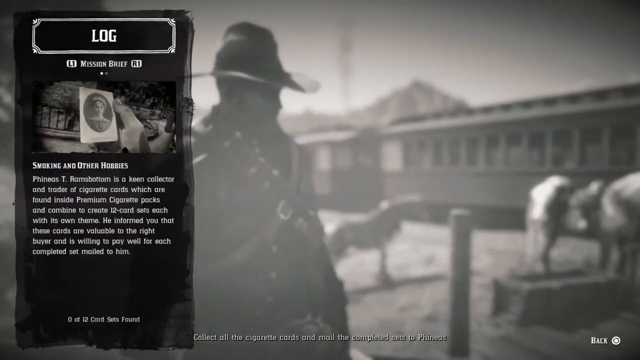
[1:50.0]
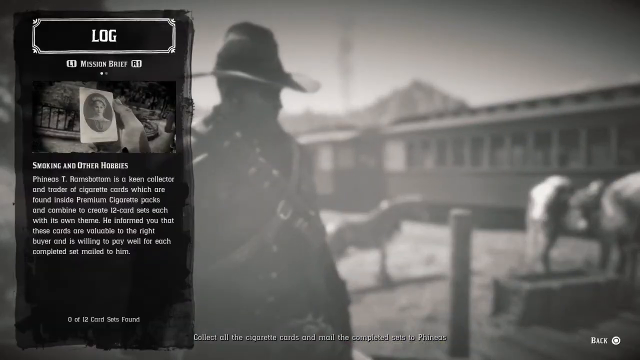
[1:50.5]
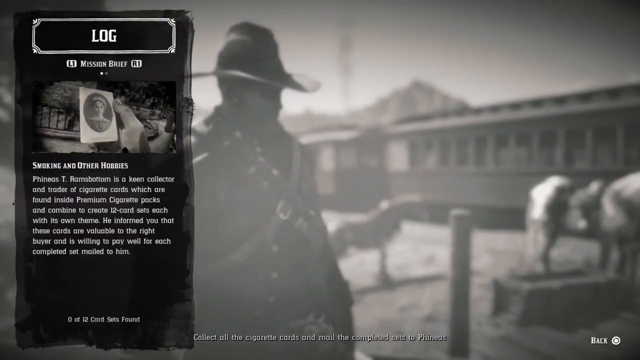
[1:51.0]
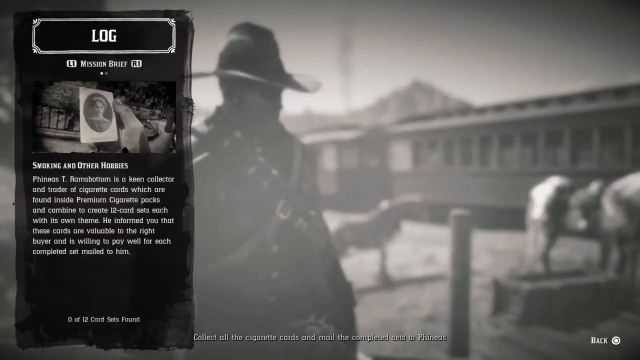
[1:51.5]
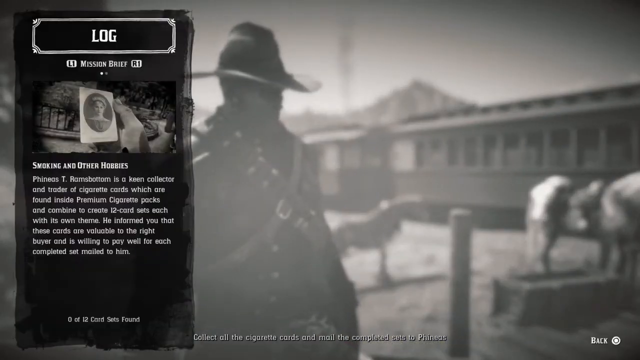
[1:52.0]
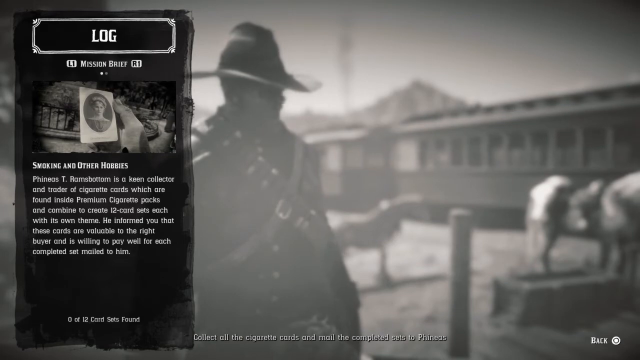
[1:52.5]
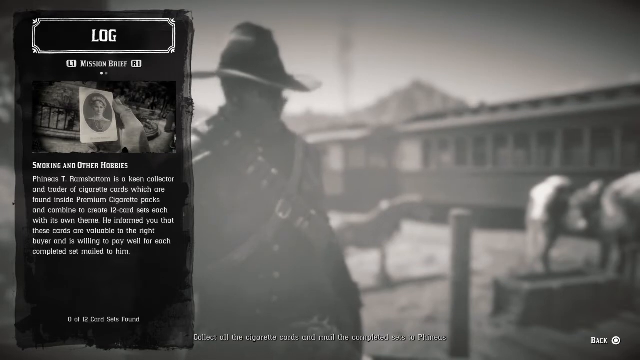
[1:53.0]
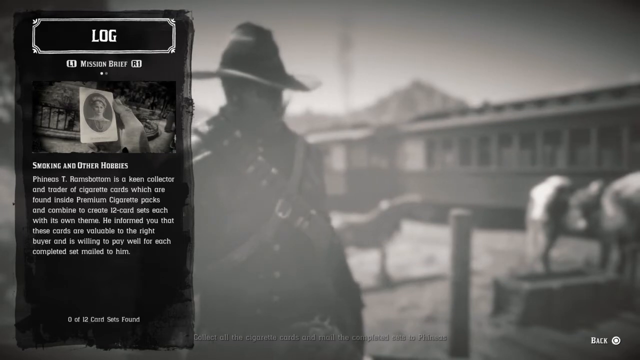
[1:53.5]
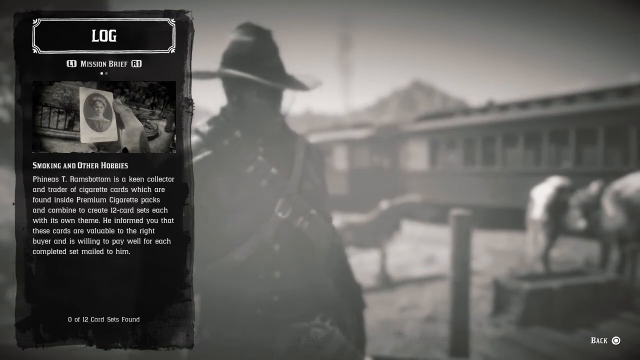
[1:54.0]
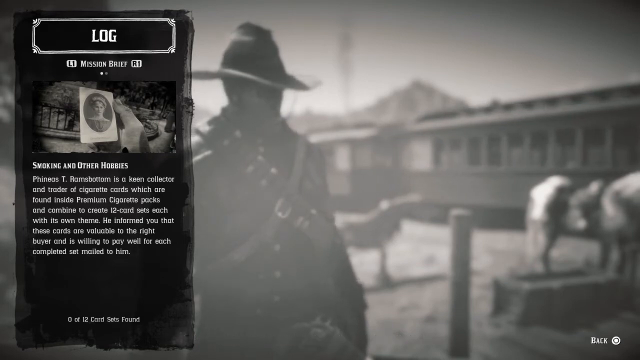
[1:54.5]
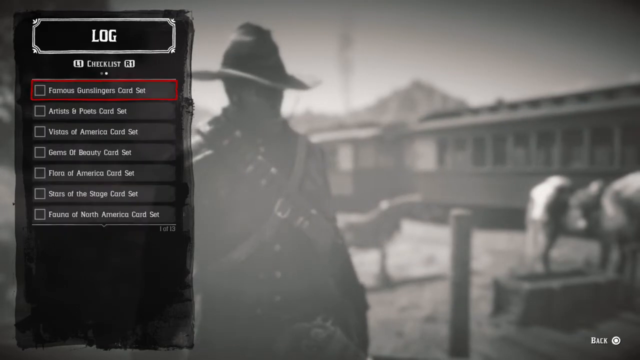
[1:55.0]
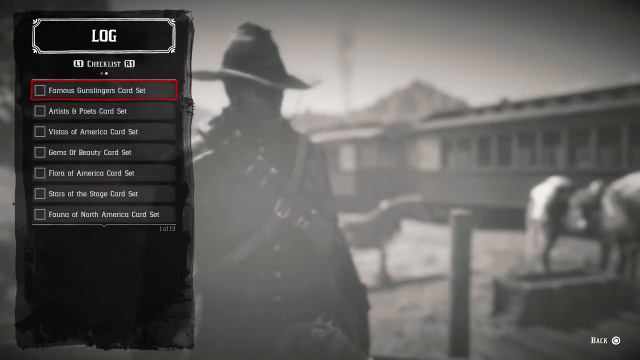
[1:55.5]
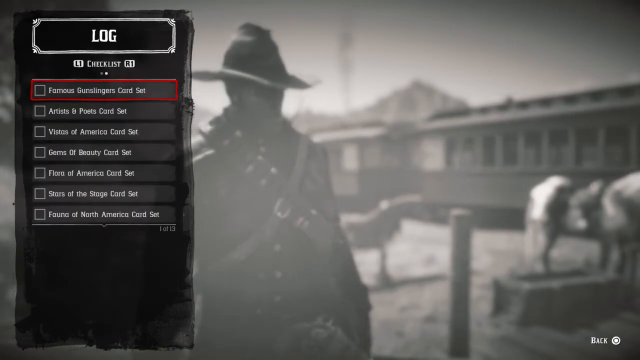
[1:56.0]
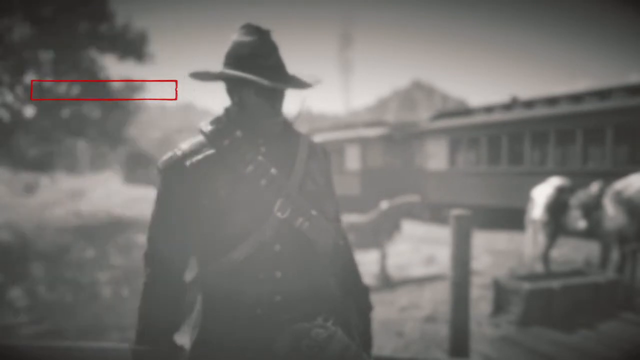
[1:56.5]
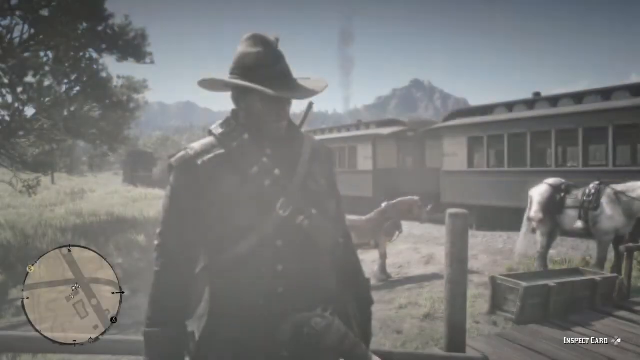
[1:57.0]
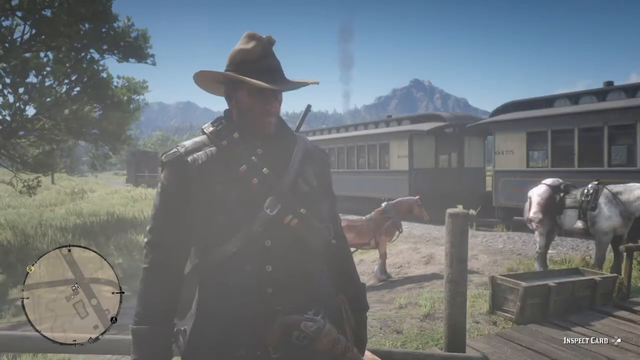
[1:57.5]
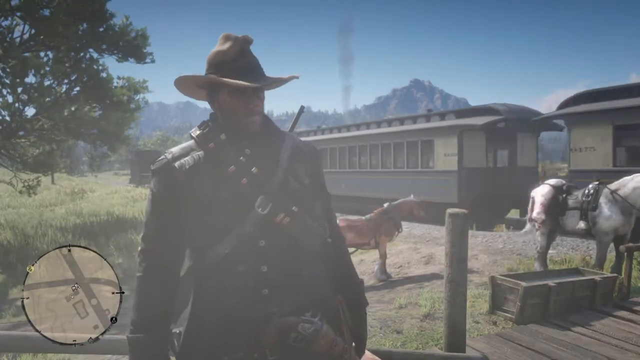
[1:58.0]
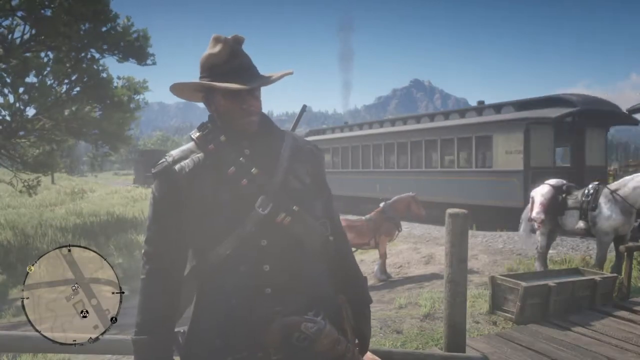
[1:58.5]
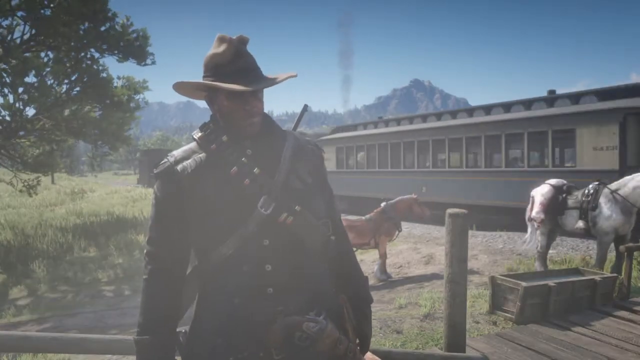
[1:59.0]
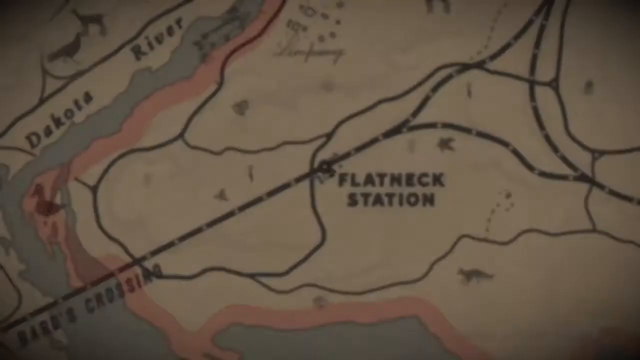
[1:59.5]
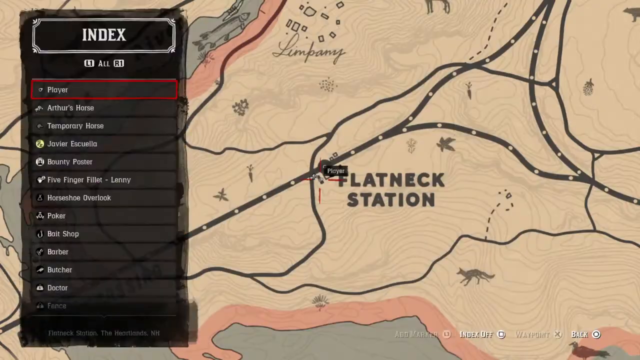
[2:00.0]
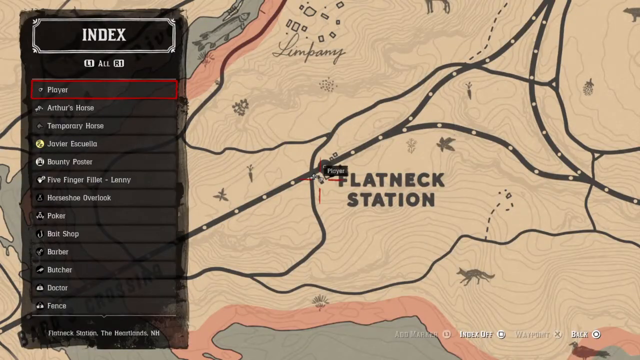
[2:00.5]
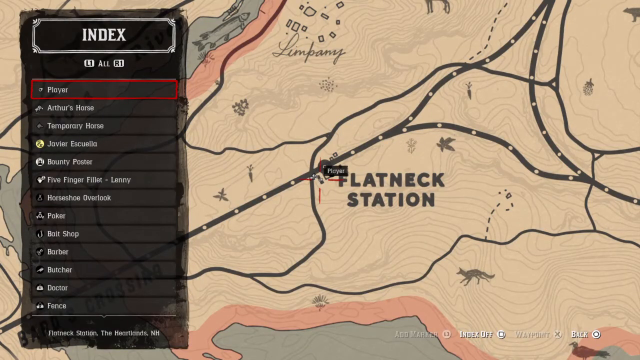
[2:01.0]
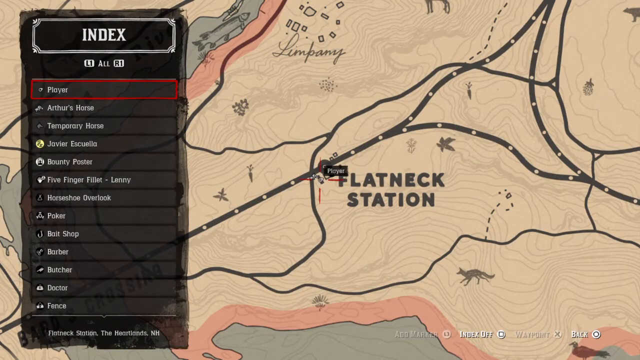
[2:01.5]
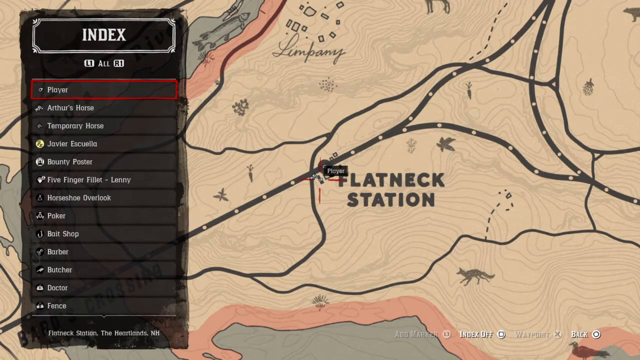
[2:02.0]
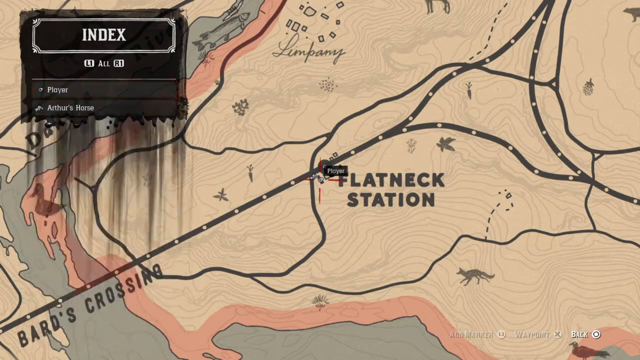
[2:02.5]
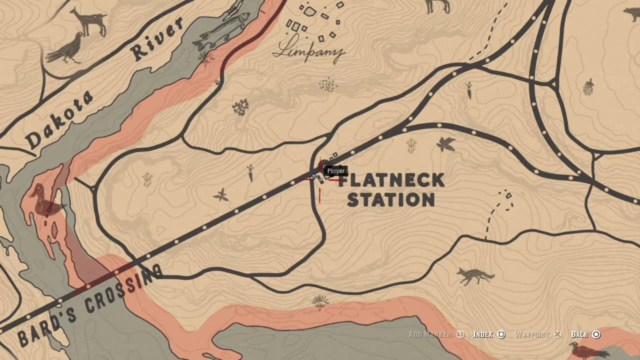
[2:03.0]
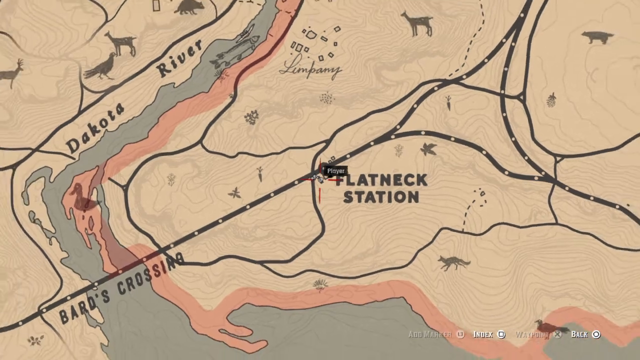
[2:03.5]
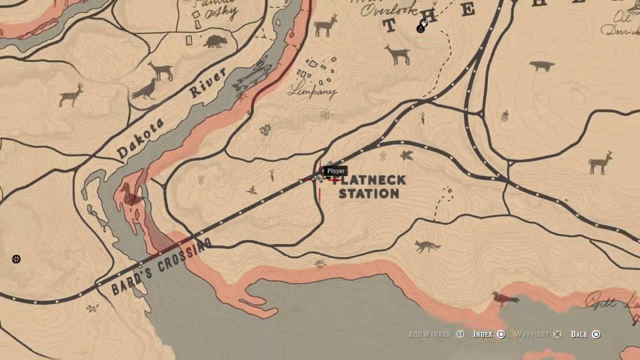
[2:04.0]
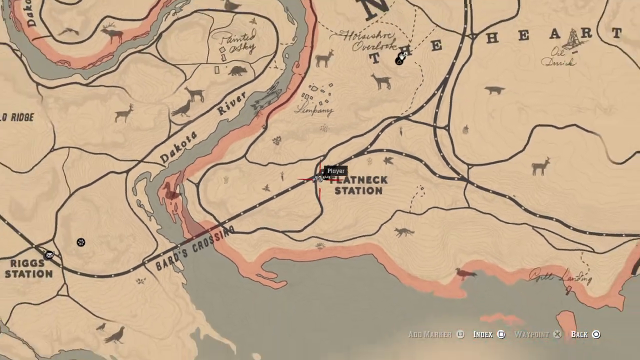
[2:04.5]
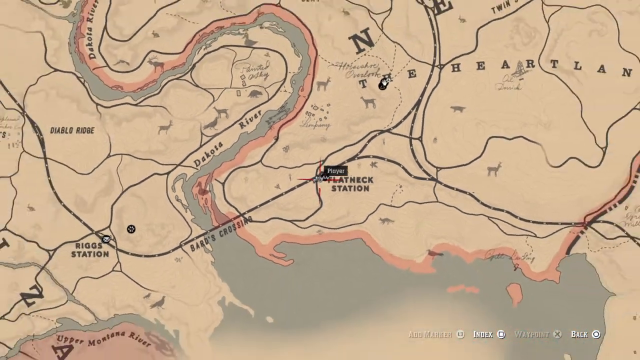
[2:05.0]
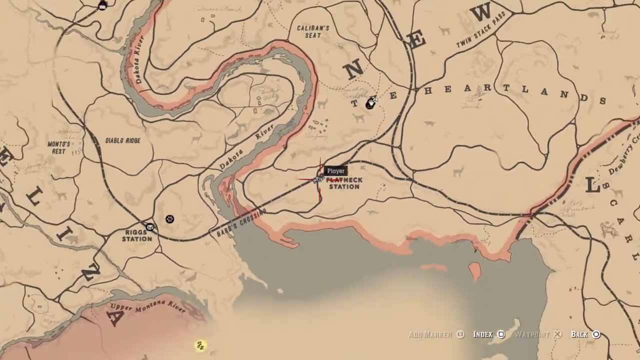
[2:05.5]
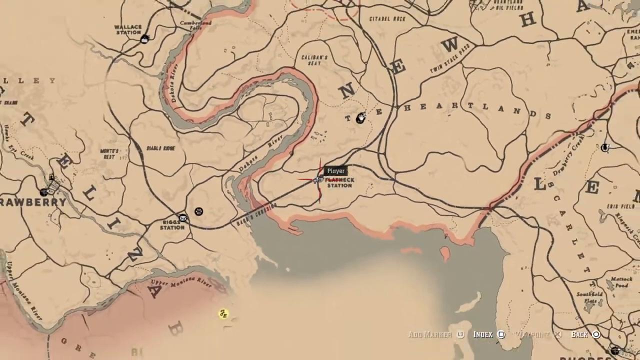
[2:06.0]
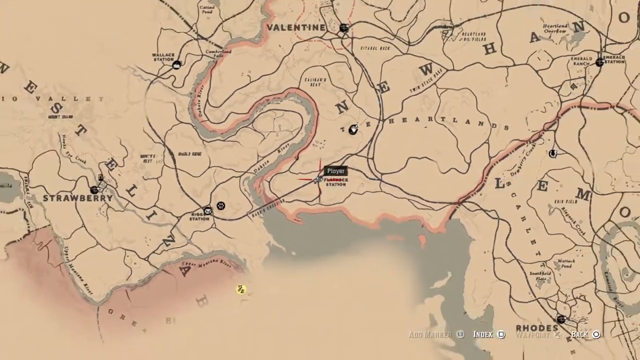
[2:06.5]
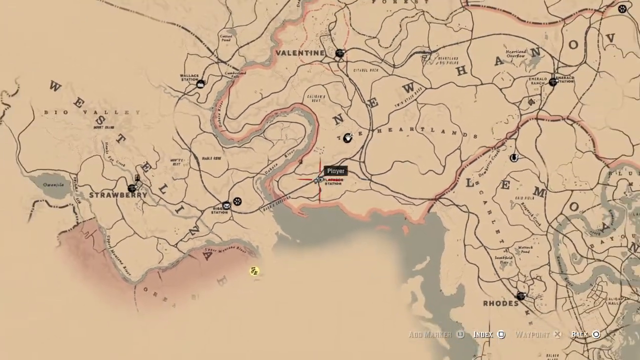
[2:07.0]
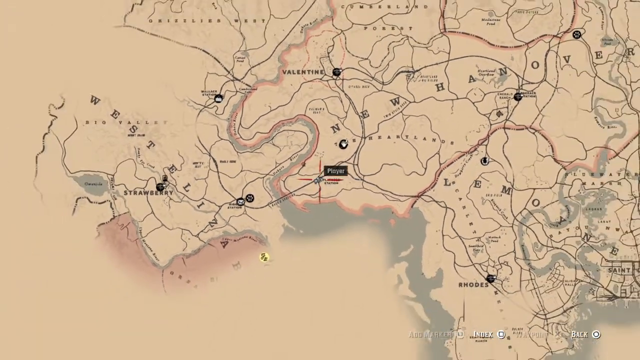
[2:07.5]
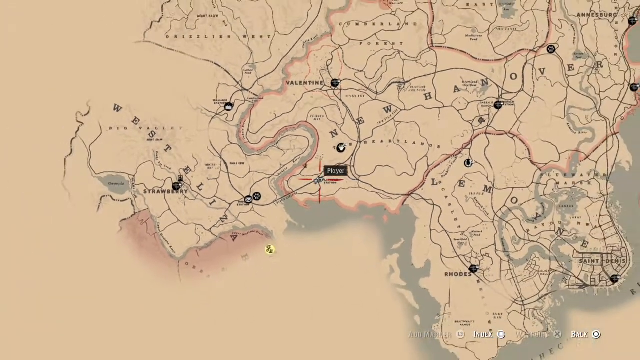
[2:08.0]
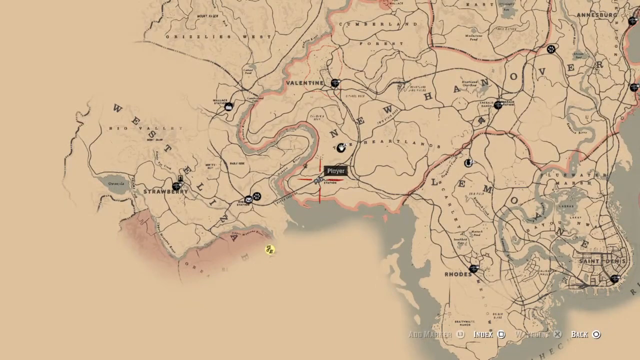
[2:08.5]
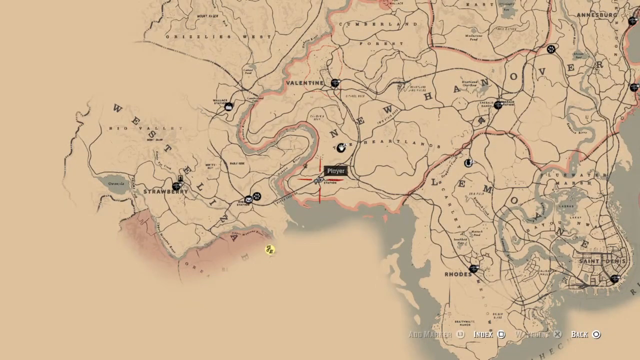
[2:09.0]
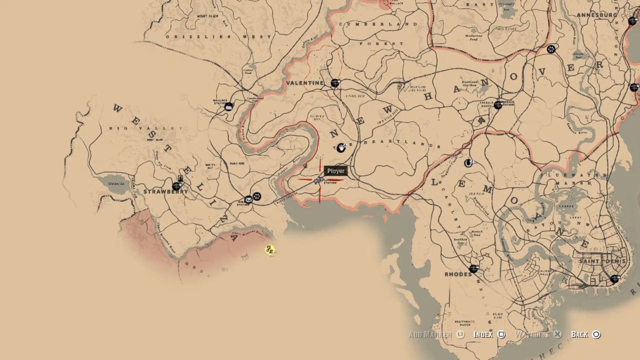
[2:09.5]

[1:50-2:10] A log comes up on the screen beneath the "smoking and other hobbies" title, with text about Phineas as a collector of cigarette cards and a brief summary of the two men's conversation. At the bottom of the log it says "0 of 12 card sets found" along with an instruction to collect all the cigarette cards and mail the completed sets to Phineas. There is a back button on the right of the screen. A checklist then opens, showing the card sets that can be collected and sent to Phineas. The train is seen proceeding out of the station. An index opens with a map next to it showing where the player is; the train station is named Flatneck Station. The map zooms out, and at the bottom is a key showing which buttons to press to navigate the game.